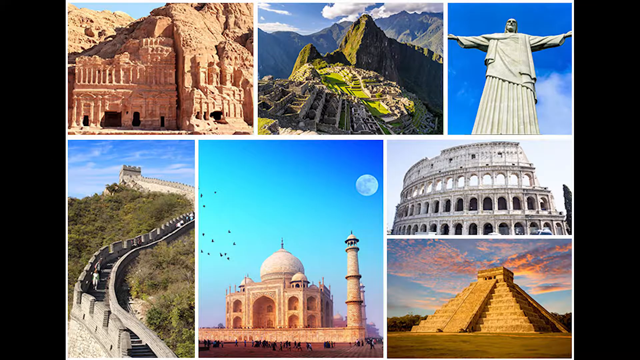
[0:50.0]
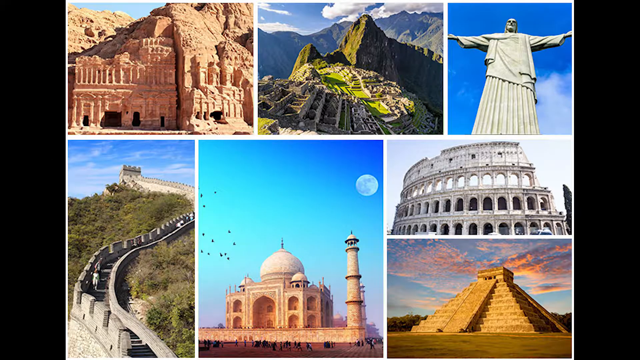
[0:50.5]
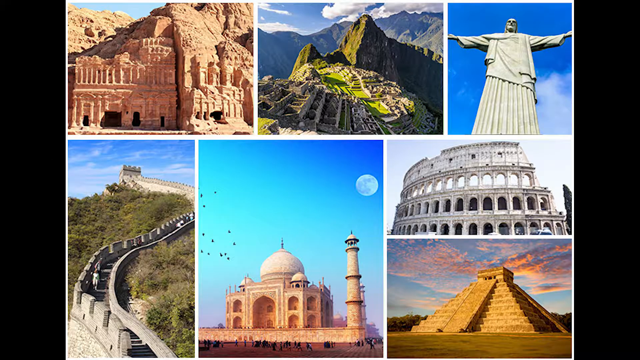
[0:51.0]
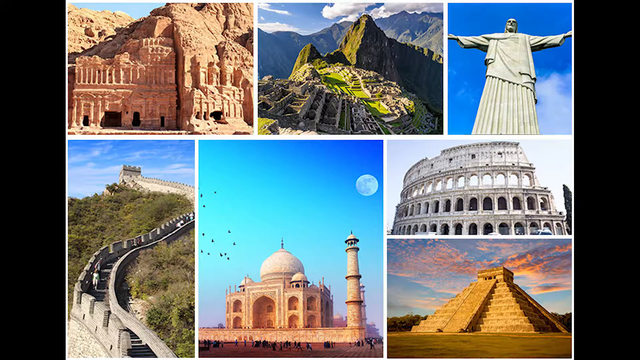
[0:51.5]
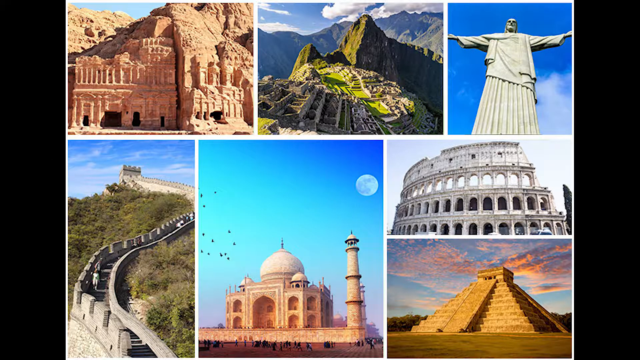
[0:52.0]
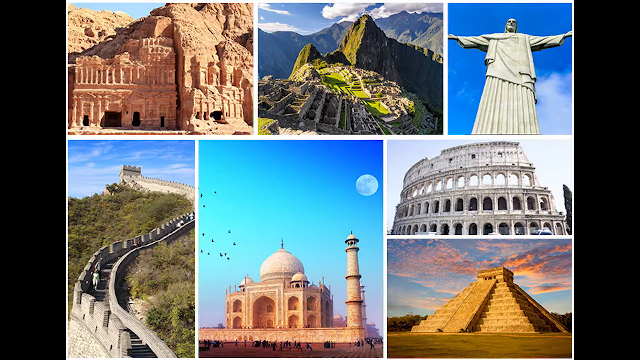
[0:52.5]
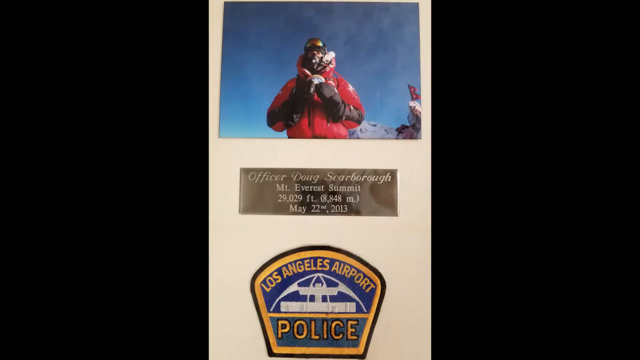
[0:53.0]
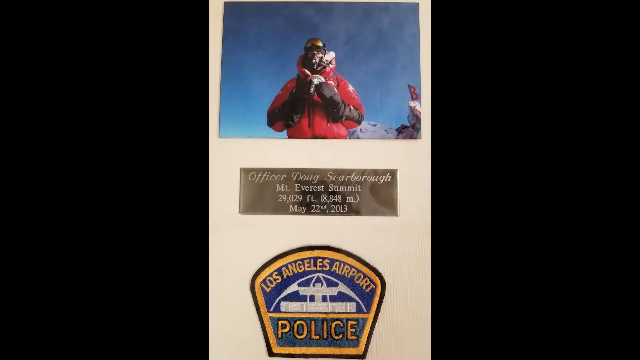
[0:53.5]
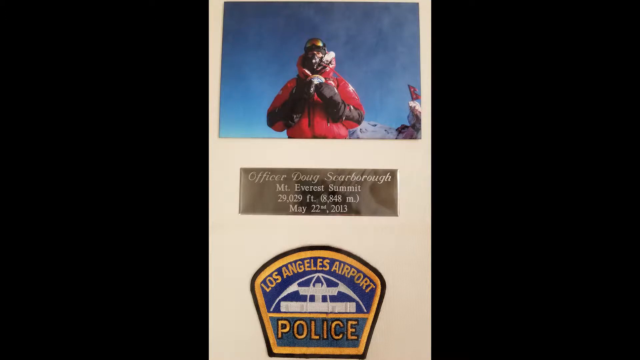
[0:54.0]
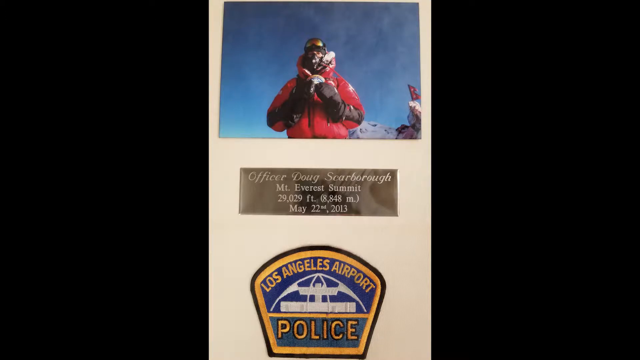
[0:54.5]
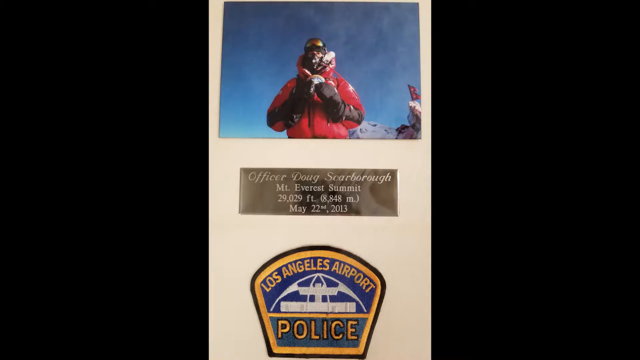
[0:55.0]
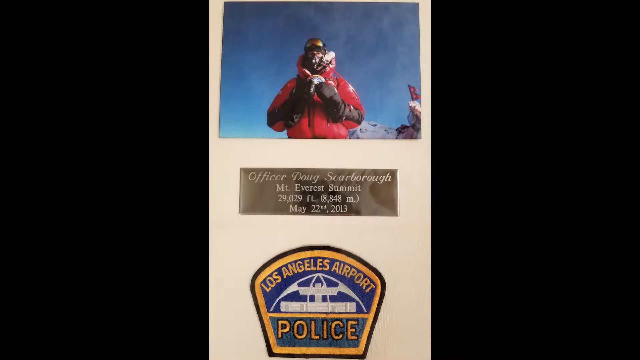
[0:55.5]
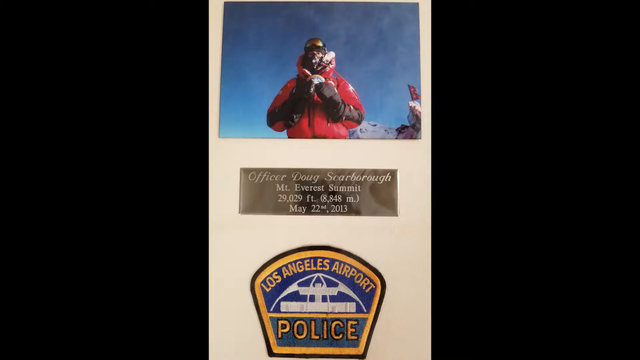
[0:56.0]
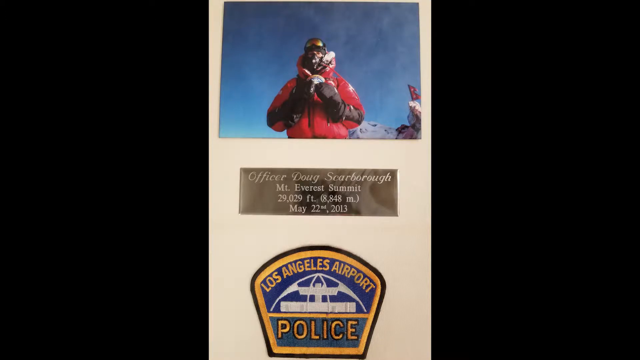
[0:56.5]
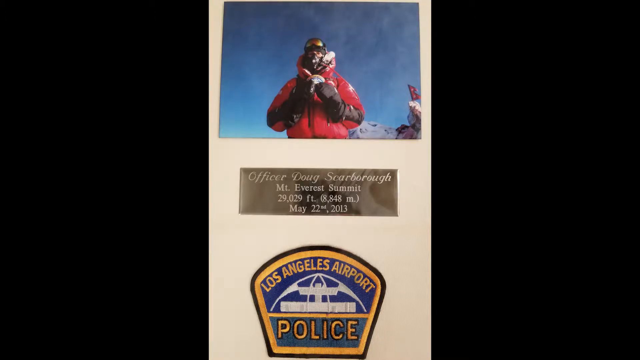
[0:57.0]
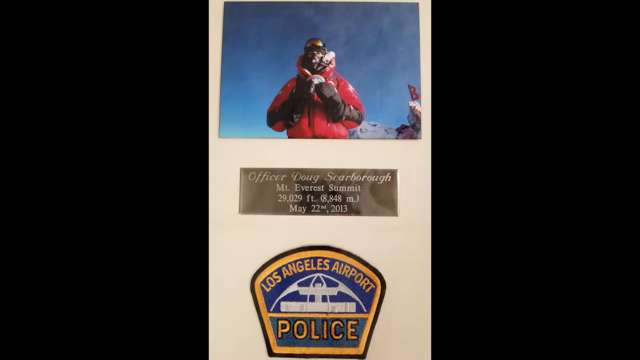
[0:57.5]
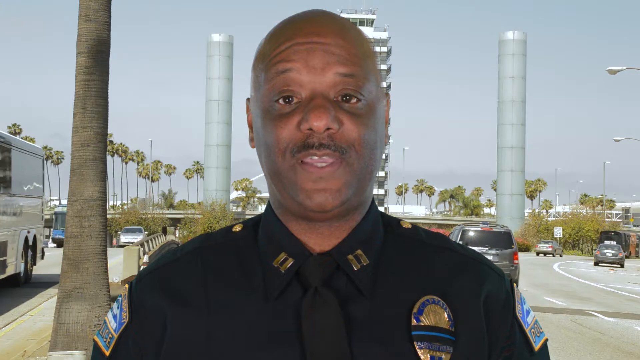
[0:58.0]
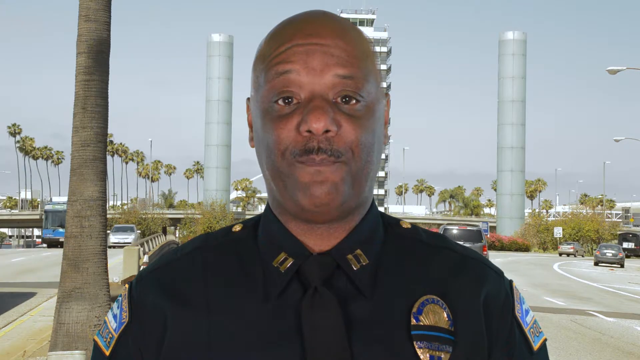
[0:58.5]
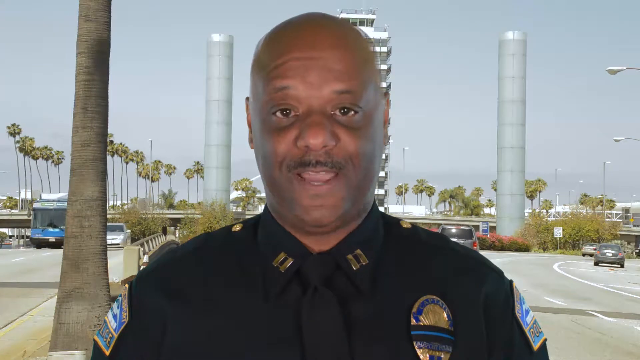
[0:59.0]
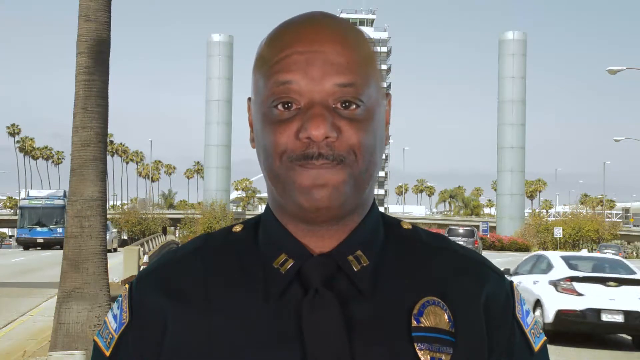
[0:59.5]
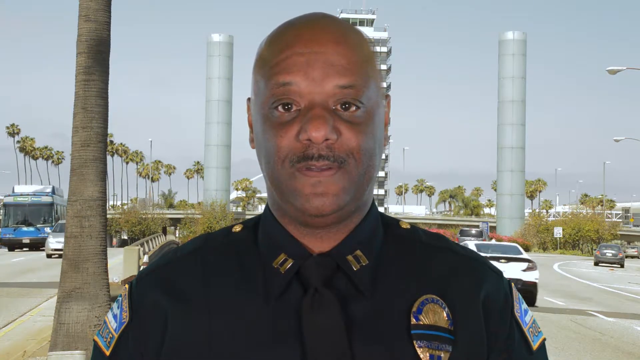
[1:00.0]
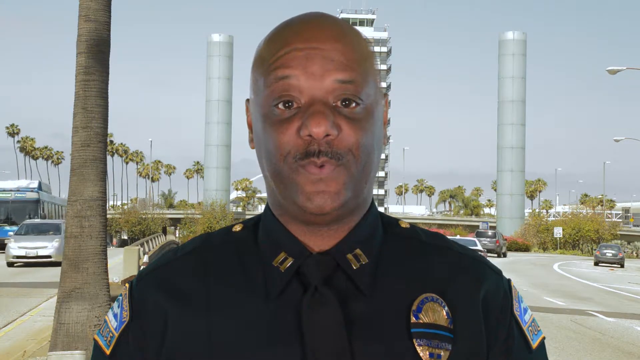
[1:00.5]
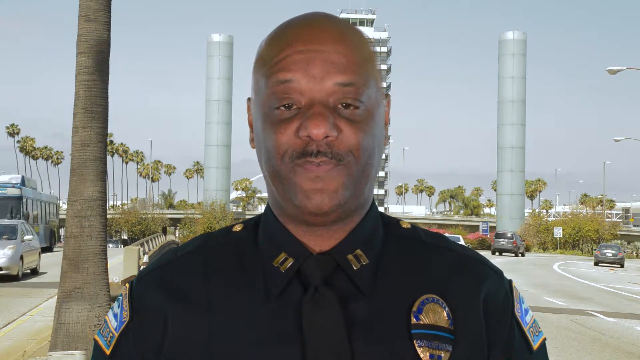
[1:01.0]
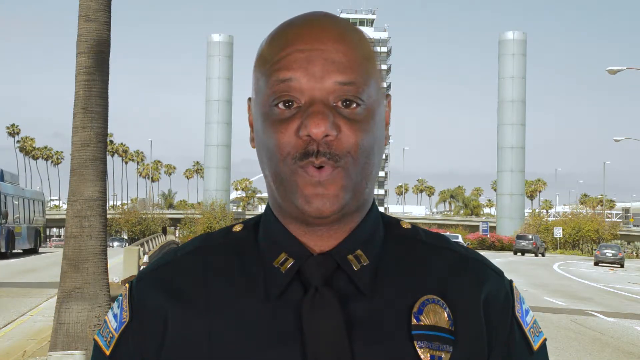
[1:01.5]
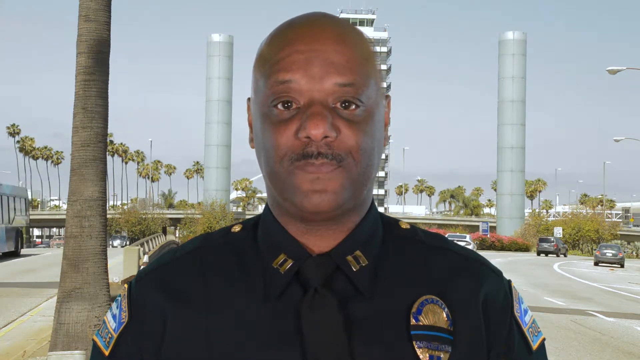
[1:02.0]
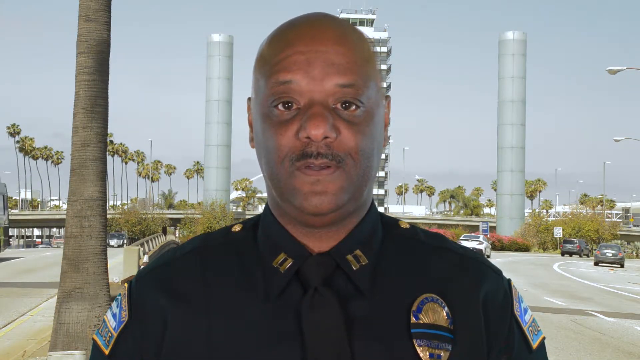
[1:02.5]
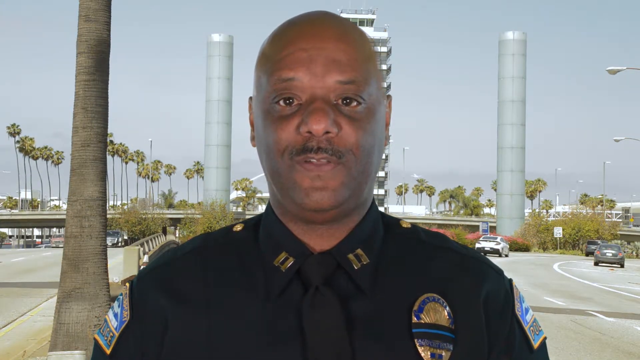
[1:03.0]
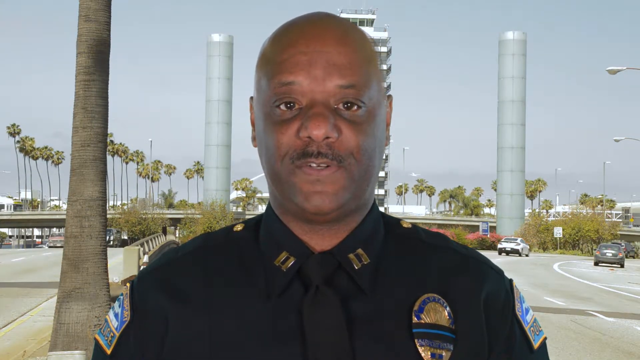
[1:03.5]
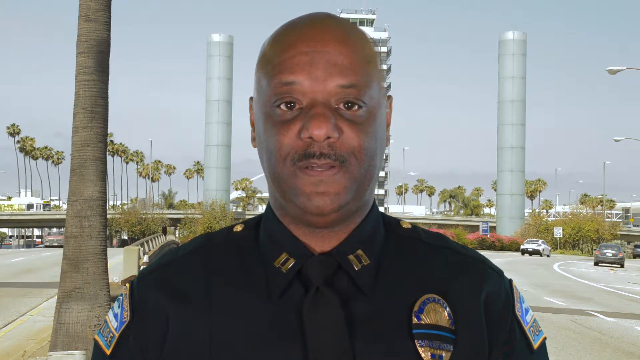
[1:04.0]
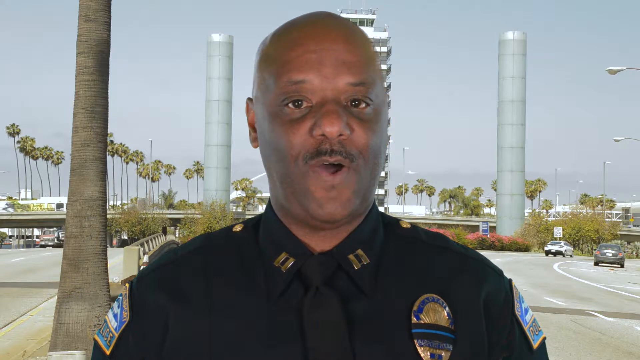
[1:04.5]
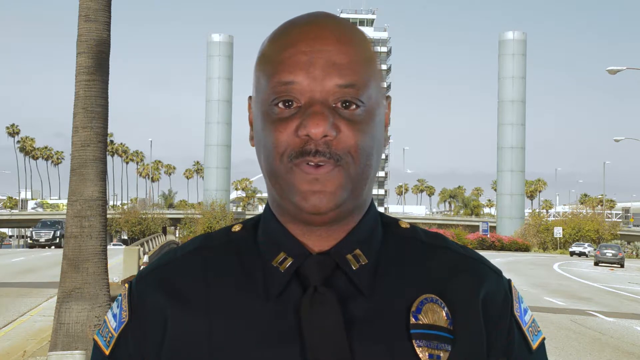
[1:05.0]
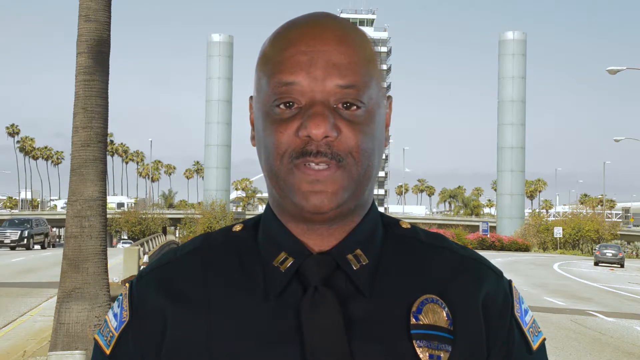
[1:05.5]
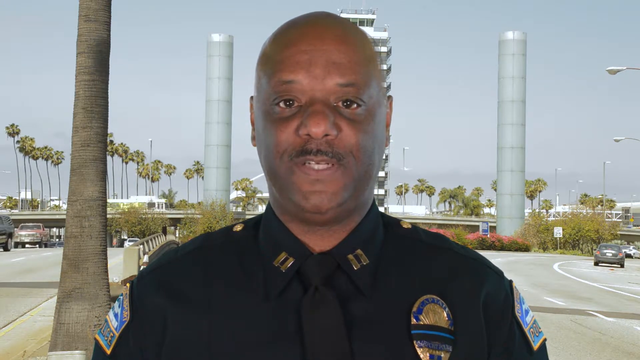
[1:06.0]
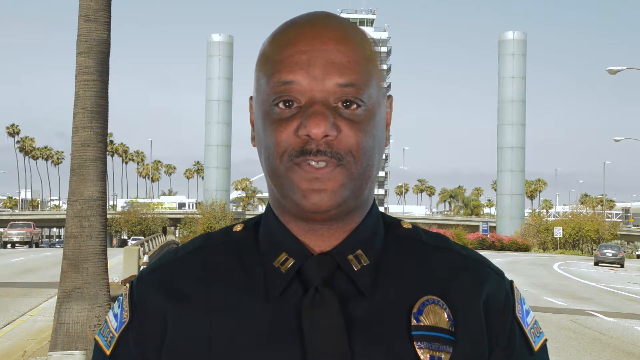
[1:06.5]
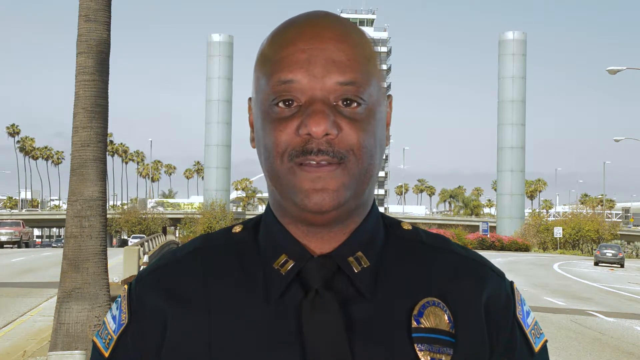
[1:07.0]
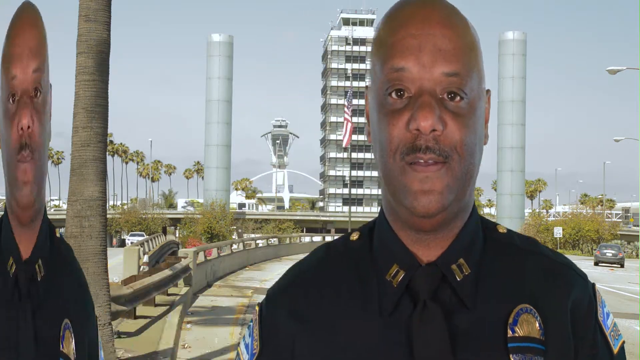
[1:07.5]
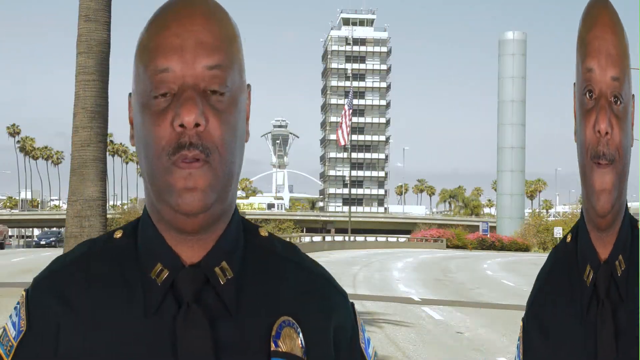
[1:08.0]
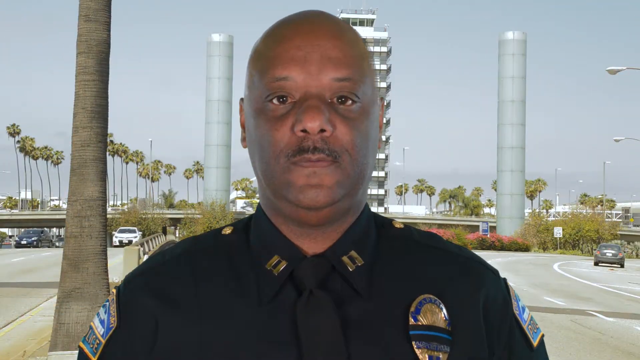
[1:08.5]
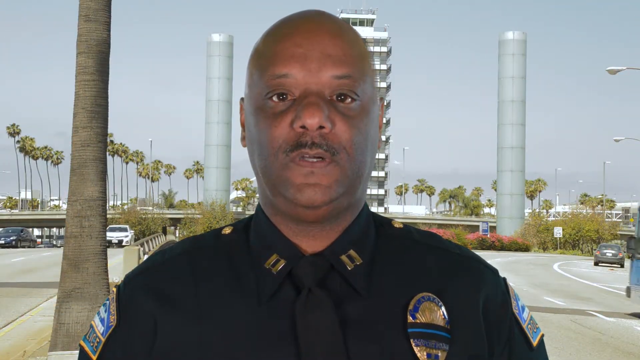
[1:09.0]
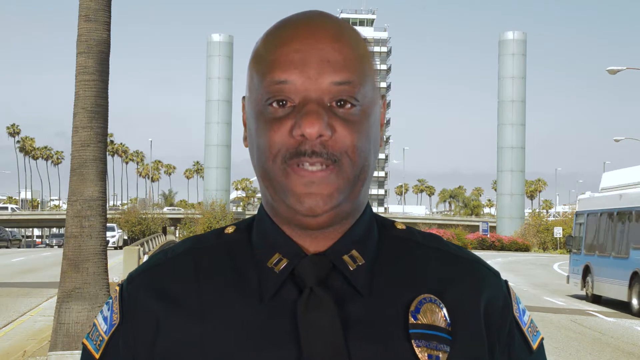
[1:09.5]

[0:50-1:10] Still images of historic sites continue: a mosque with a pole on top as birds fly across and a faint moon is in the sky, a colosseum with a white background, and a pyramid under a sky in lavender, blue and other colors. The video then shows an image of a man putting on a red winter jacket, with text reading "officer Doug Scarborough Mount Everest summit 29,029 feet (8,848 m)" and "May 22nd 2013", followed by the Los Angeles airport police emblem, all on a cream background. The video cuts to Officer Stalling as he slightly nods his head, his lips moving; he blinks and slightly shakes his head. It cuts once more to Officer Stalling as he nods his head.